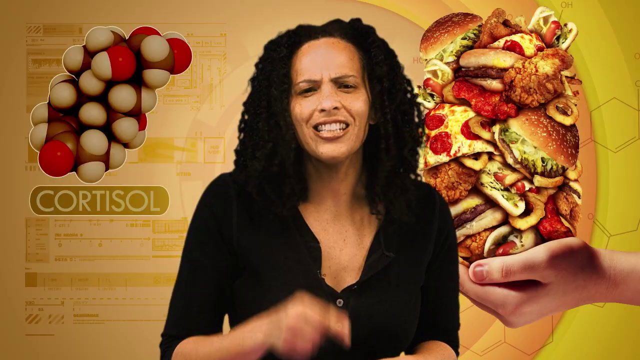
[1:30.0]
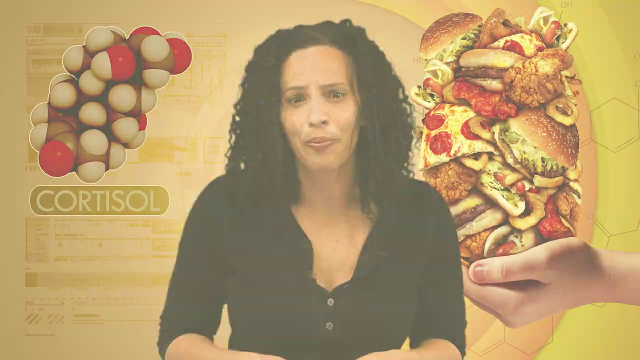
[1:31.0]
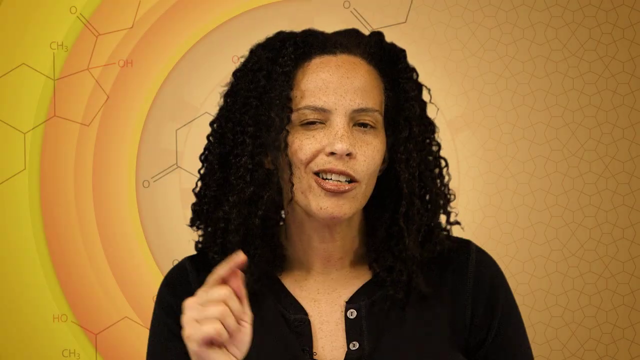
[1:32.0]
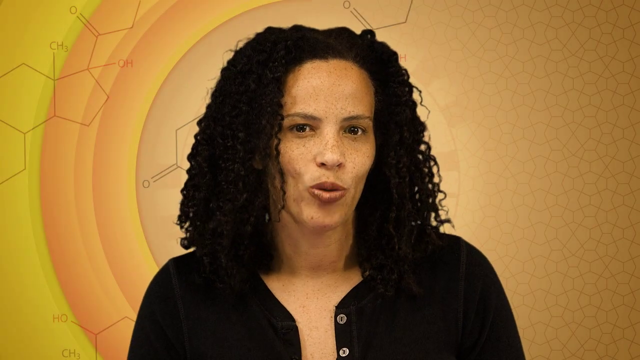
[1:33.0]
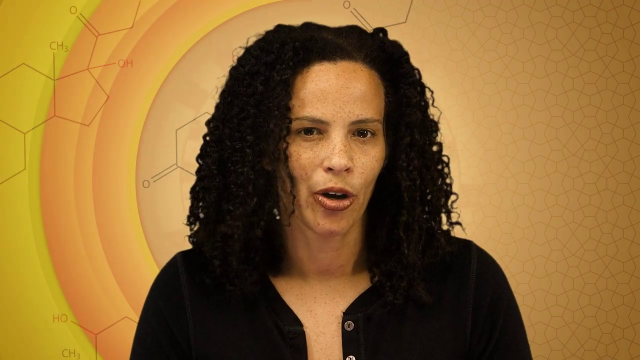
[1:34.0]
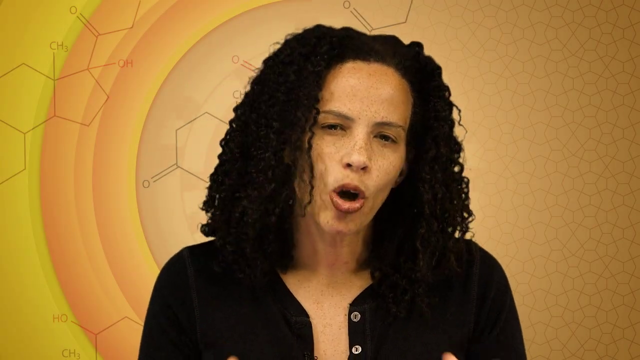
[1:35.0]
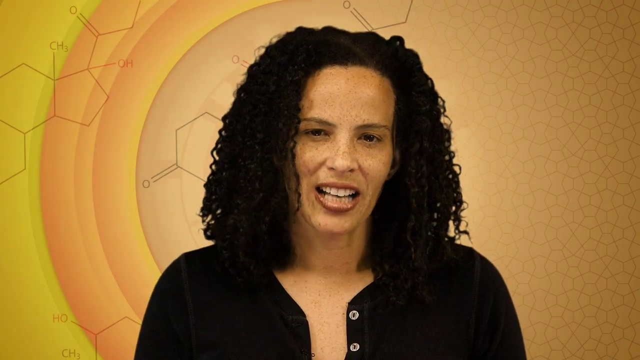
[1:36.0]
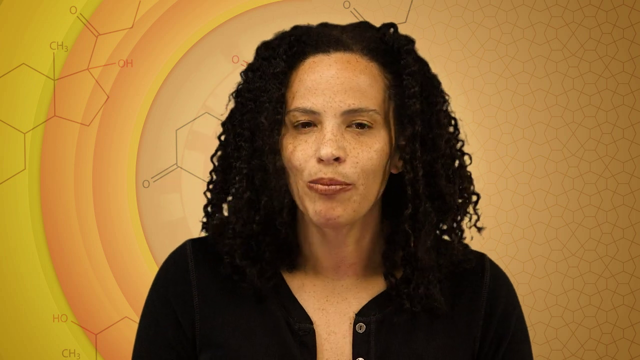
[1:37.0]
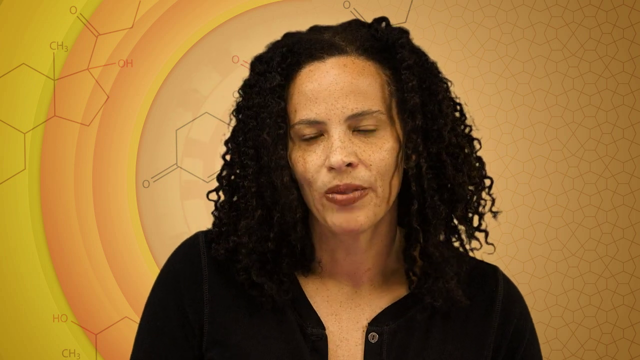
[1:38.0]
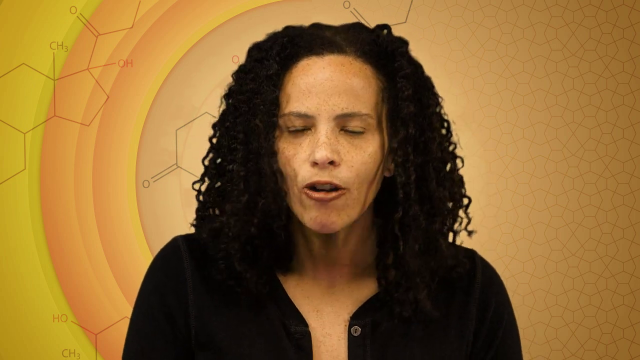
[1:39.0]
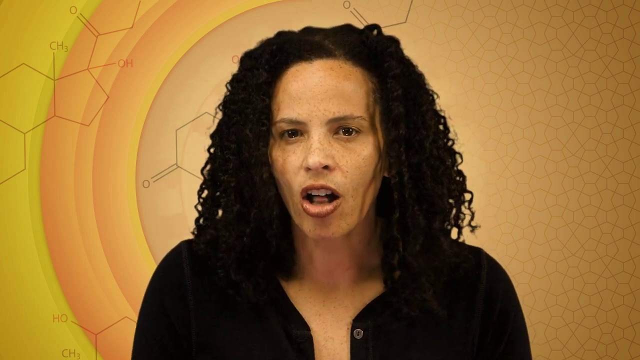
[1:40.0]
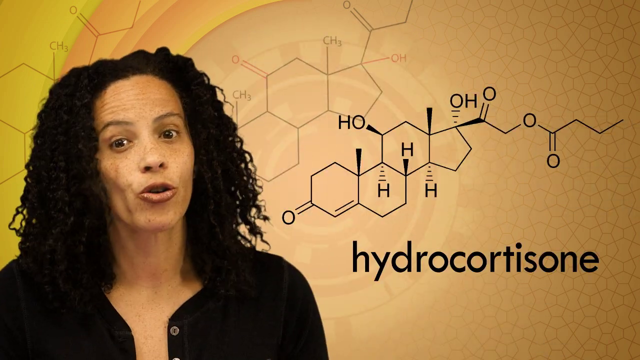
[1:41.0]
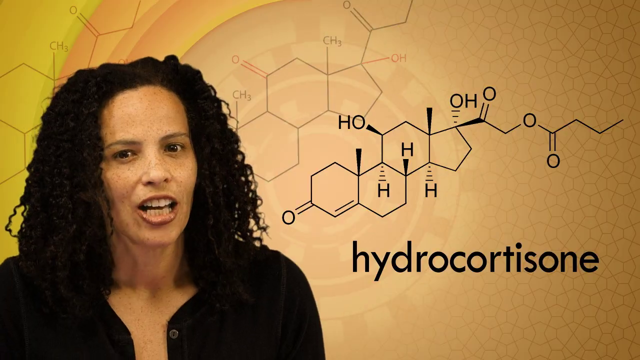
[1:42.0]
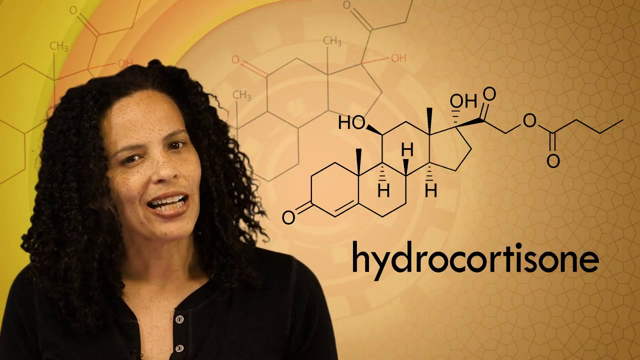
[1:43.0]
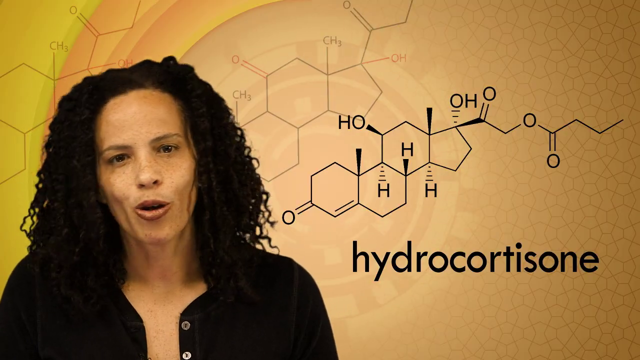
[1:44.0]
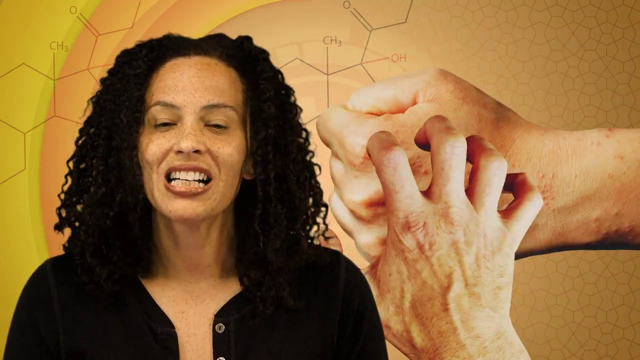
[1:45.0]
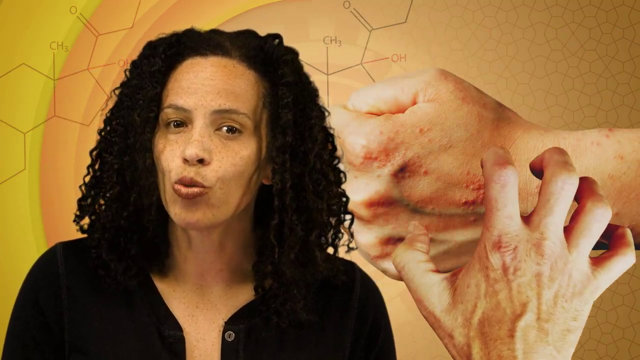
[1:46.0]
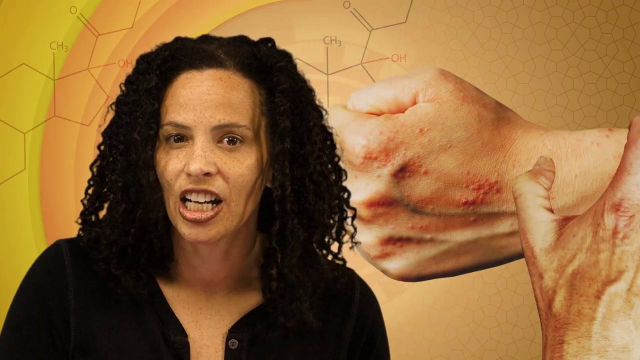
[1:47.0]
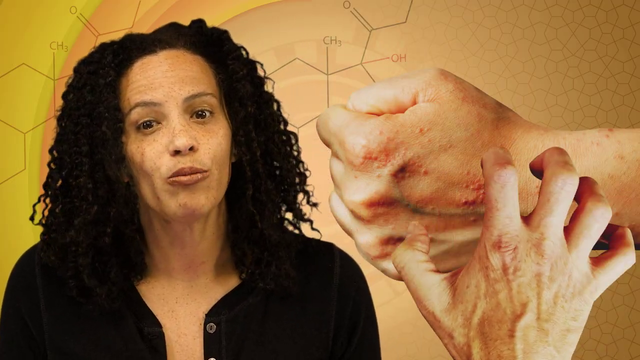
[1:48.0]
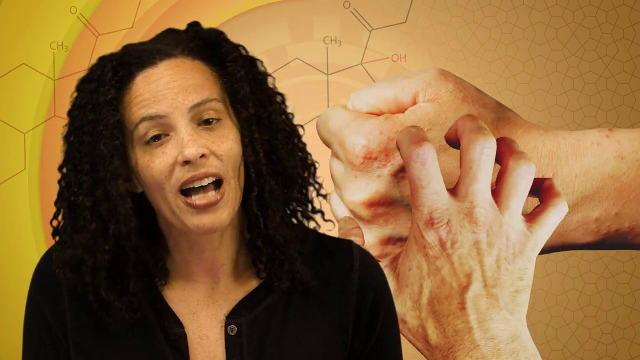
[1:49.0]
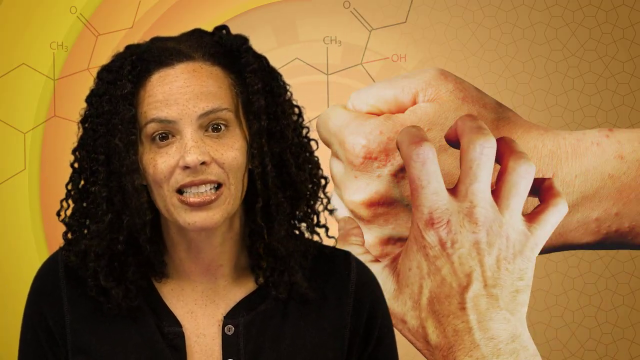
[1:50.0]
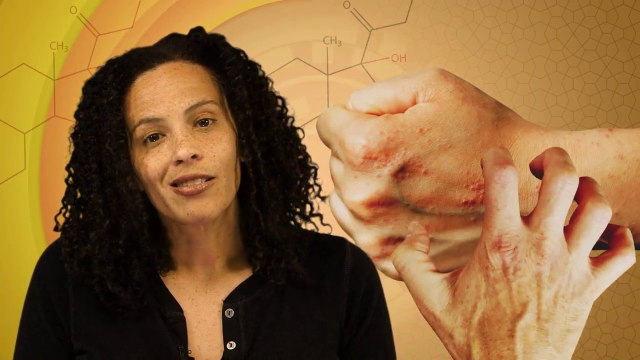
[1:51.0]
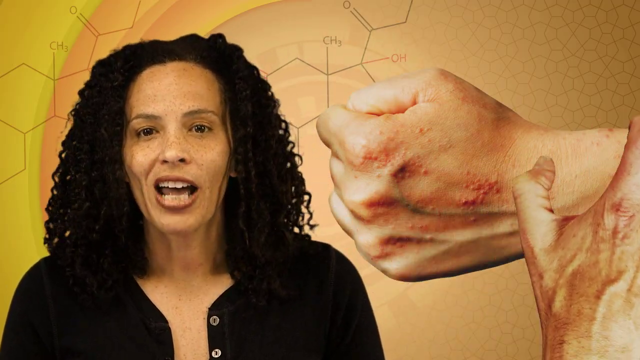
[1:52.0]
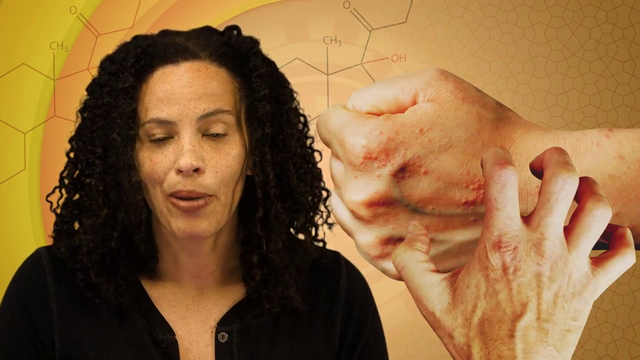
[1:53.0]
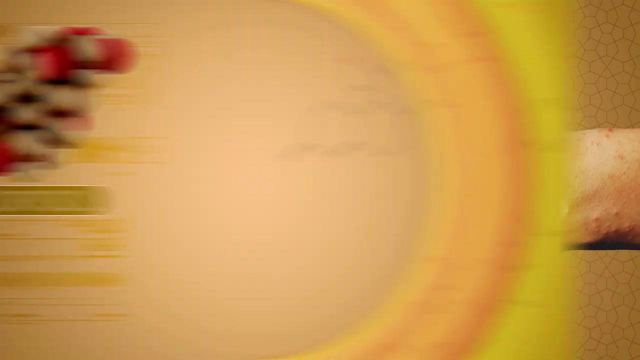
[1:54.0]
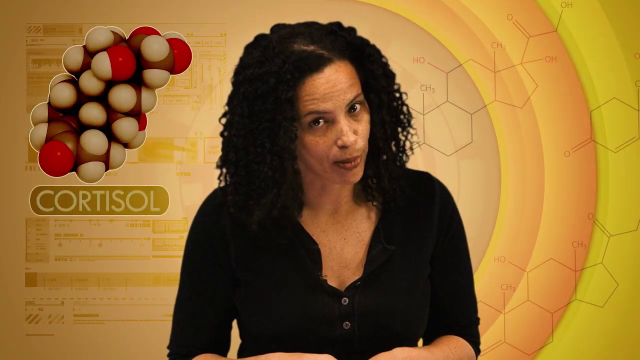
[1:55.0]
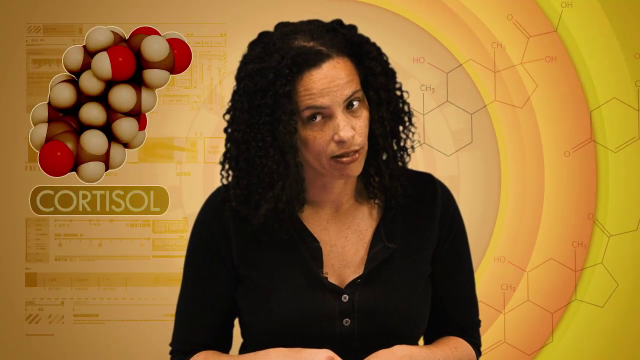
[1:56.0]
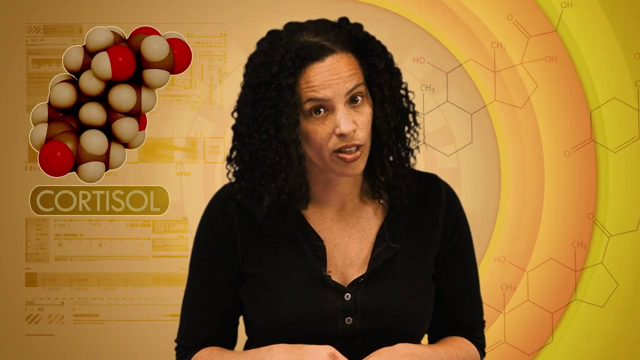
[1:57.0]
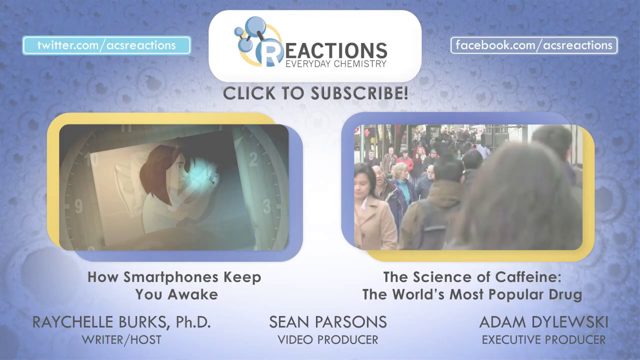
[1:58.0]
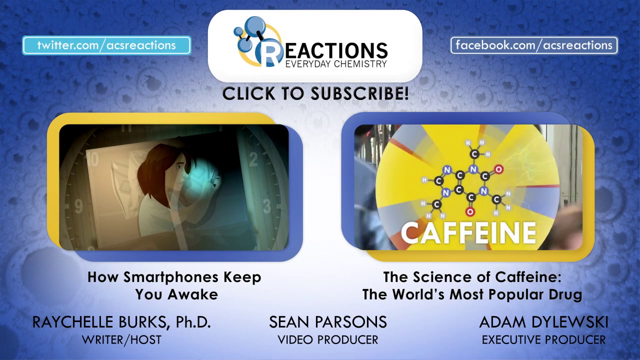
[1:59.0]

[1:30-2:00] The woman is in the middle, facing the viewer and talking, with a pile of junk food on the right and an image of cortisol on the left. After a scene change she is in the middle again with what appears to be a chemical formula in the background. She moves to the left and keeps talking while the word "hydro cortisone" appears on the right with its chemical formula above it. Then on the right, one hand is closed in a fist with a rash on its upper area, and another hand scratches the top of it. The woman appears in the middle talking, tilts her head down to the bottom right and shakes her head. The scene then shows options to click two videos: the left one is "how smartphones keep you awake" and the right one says "the science of caffeine, the world's most popular drug."